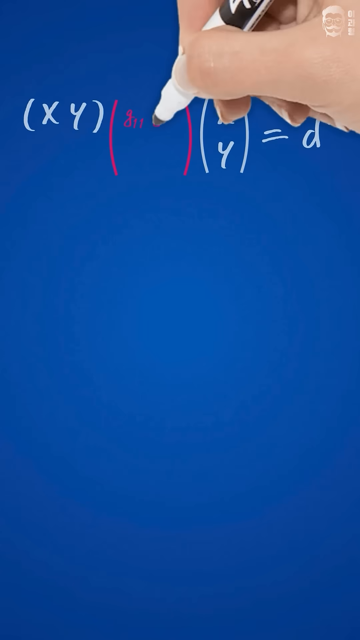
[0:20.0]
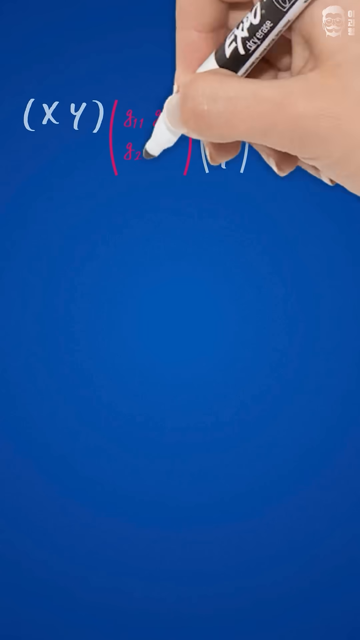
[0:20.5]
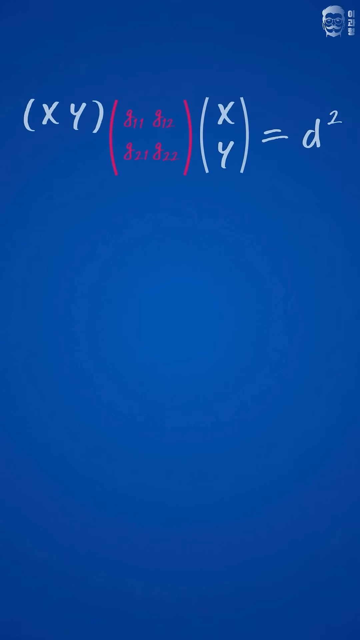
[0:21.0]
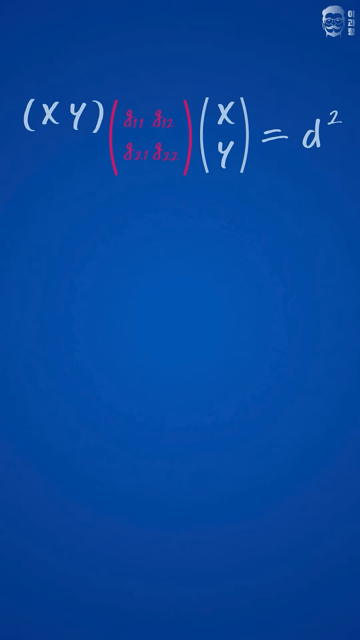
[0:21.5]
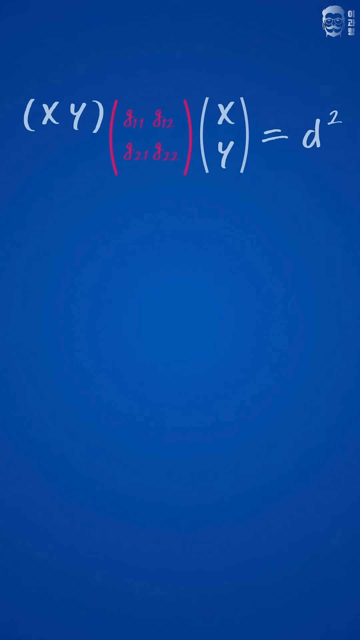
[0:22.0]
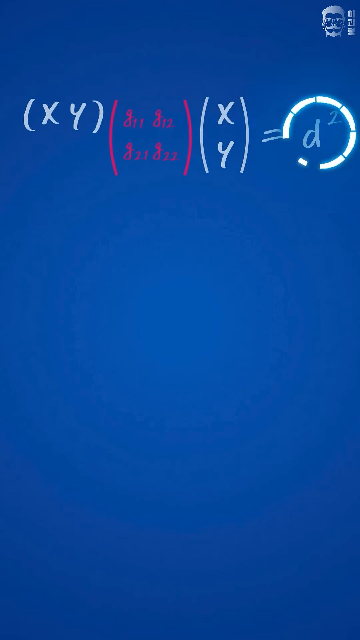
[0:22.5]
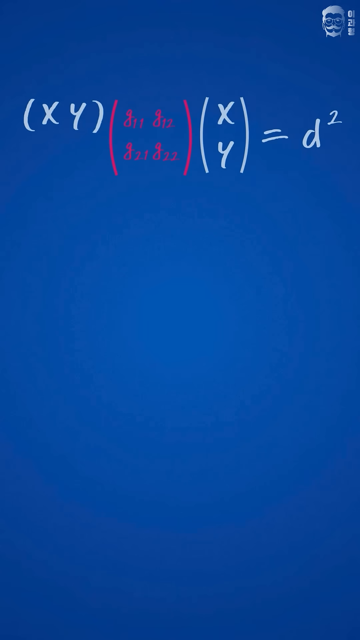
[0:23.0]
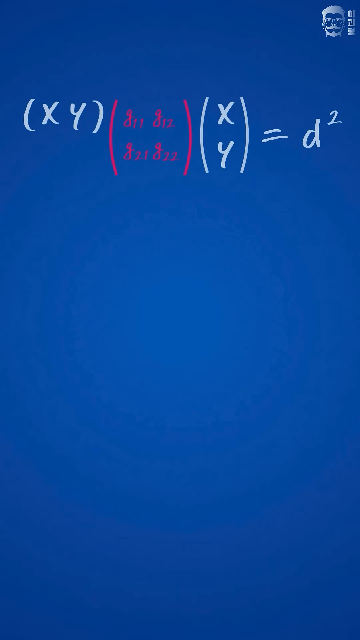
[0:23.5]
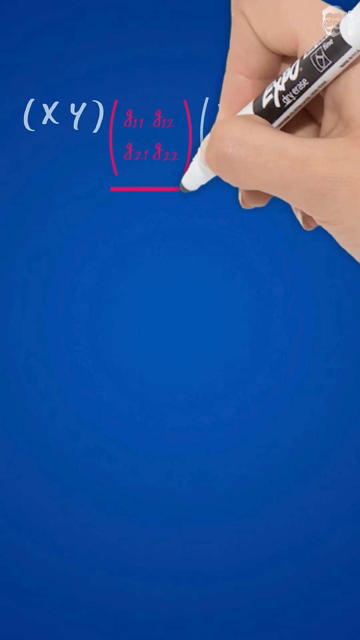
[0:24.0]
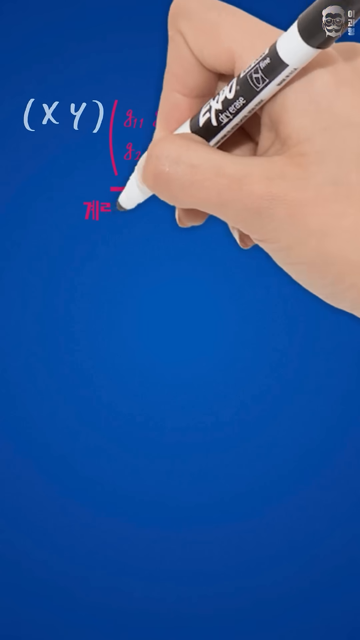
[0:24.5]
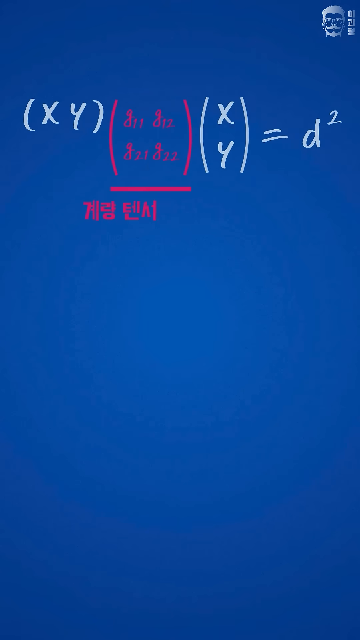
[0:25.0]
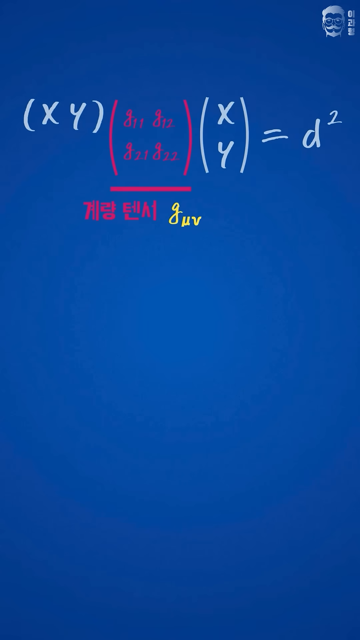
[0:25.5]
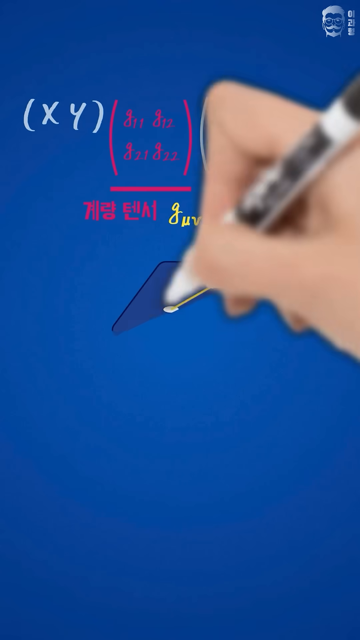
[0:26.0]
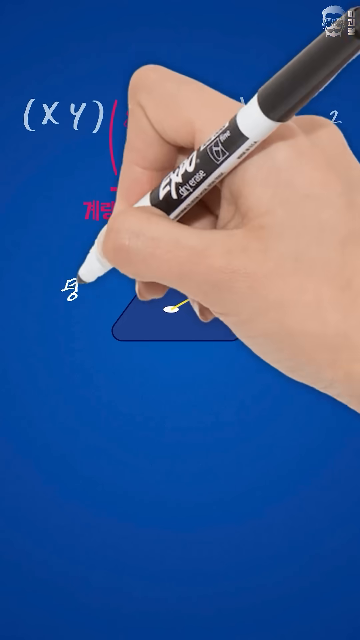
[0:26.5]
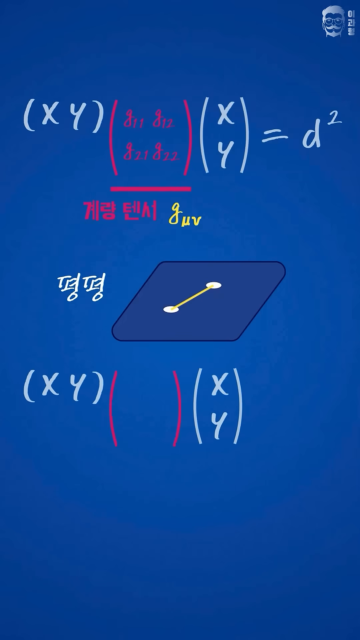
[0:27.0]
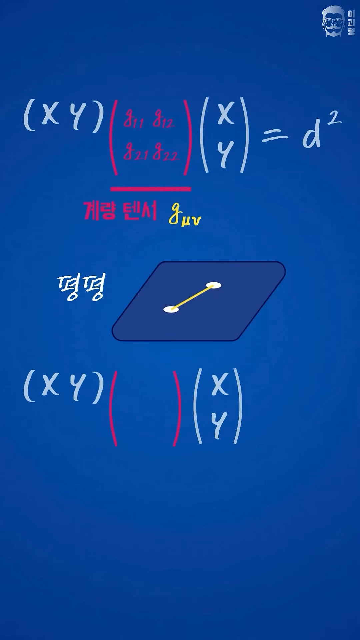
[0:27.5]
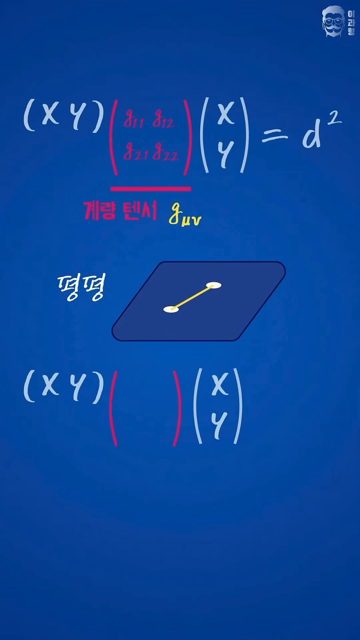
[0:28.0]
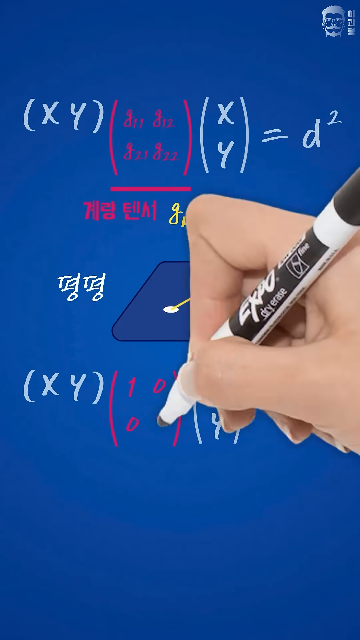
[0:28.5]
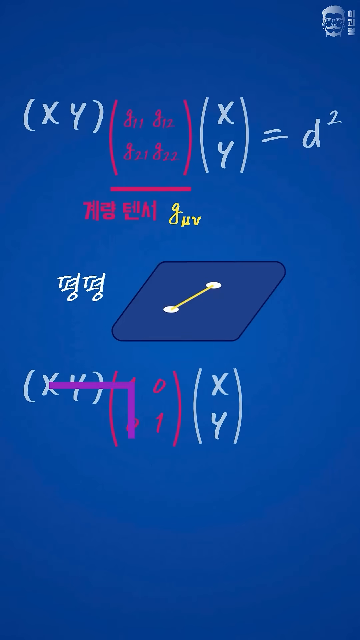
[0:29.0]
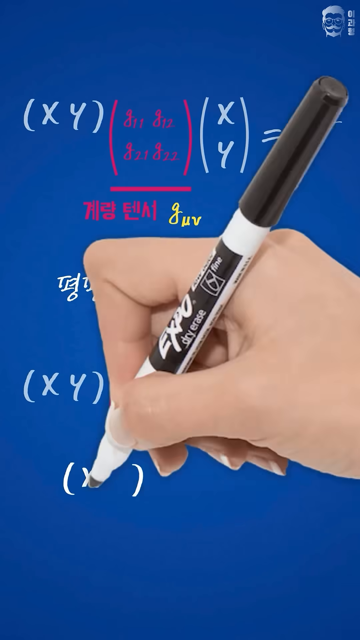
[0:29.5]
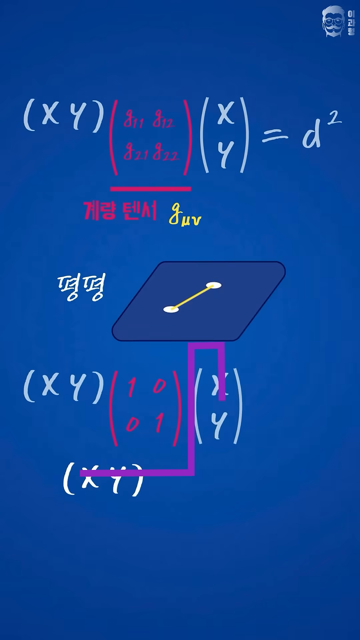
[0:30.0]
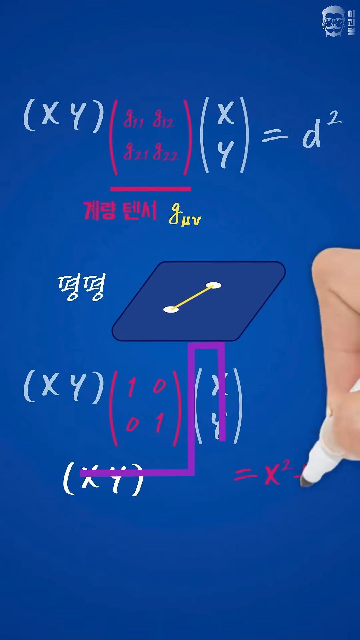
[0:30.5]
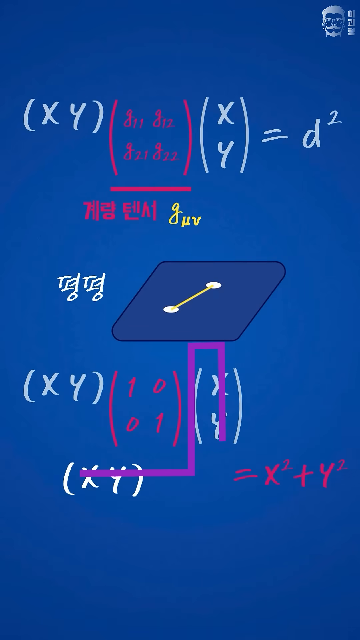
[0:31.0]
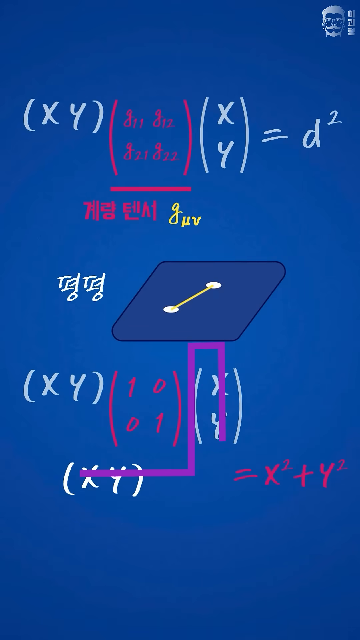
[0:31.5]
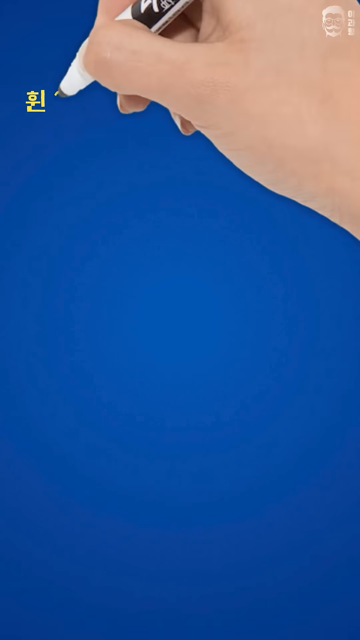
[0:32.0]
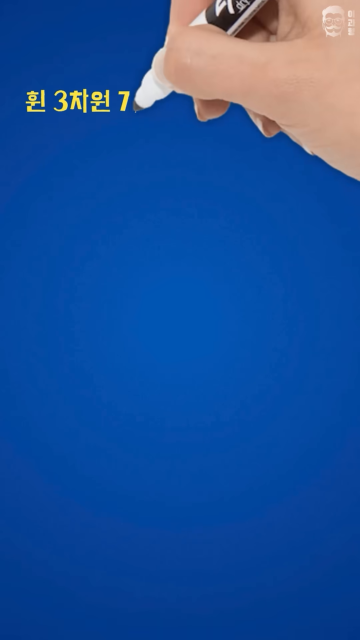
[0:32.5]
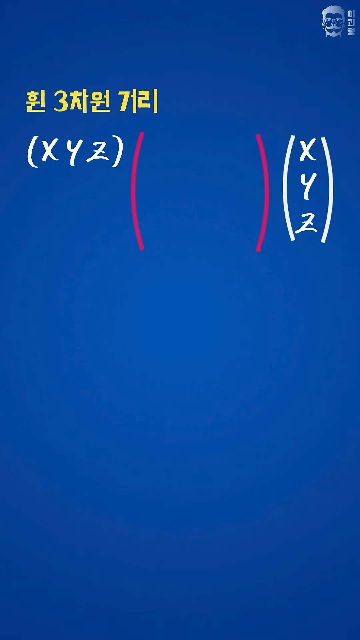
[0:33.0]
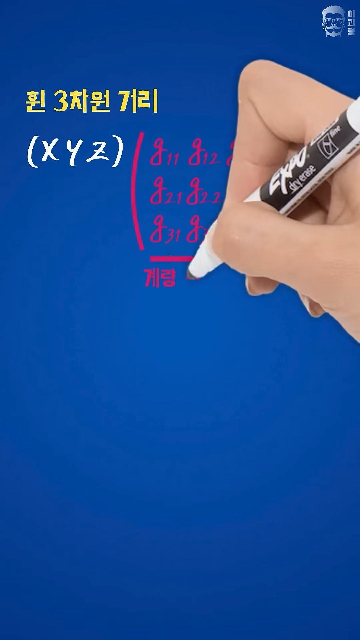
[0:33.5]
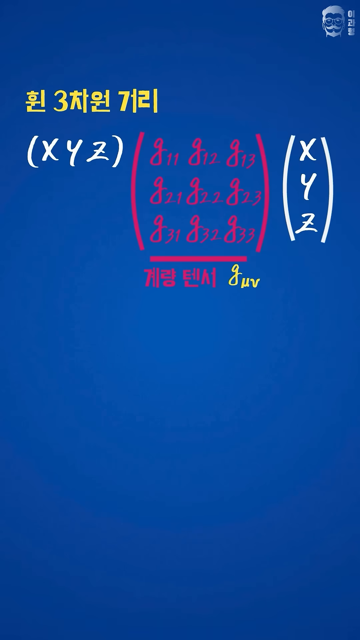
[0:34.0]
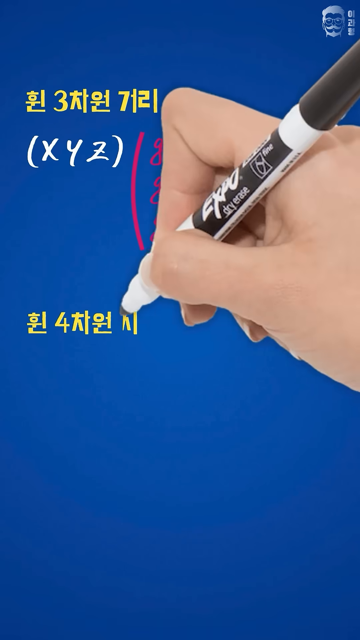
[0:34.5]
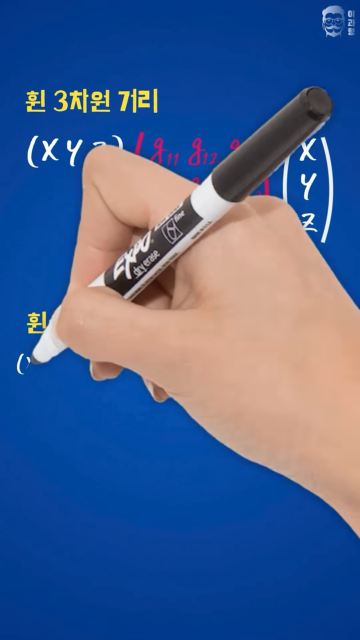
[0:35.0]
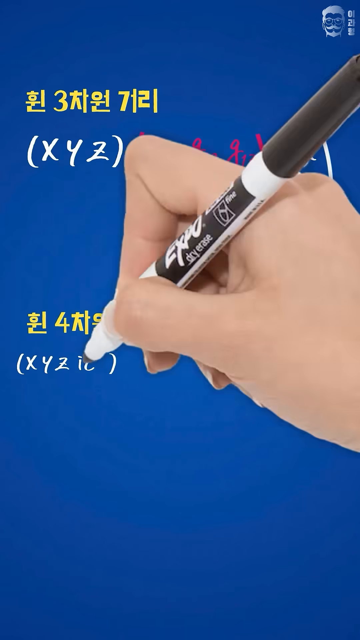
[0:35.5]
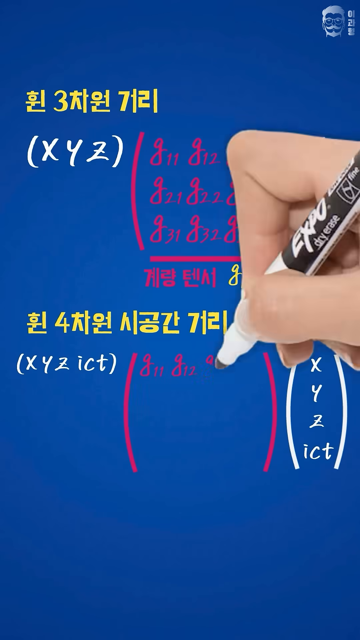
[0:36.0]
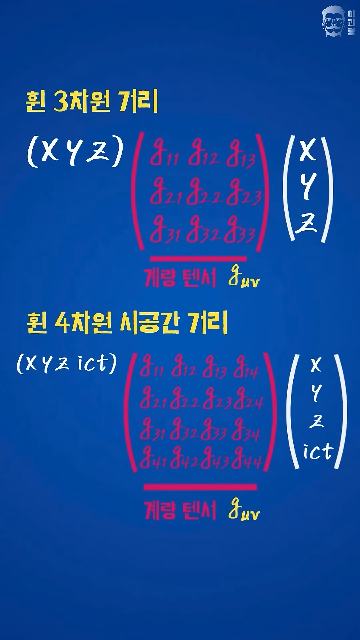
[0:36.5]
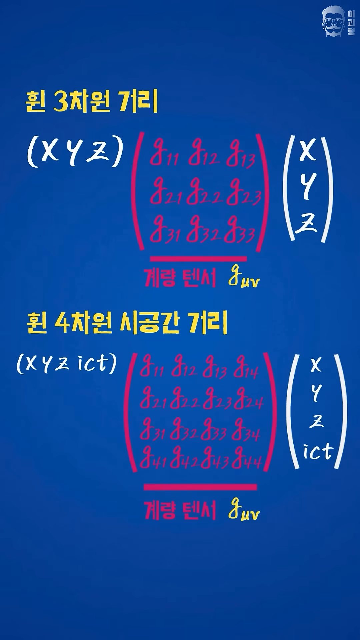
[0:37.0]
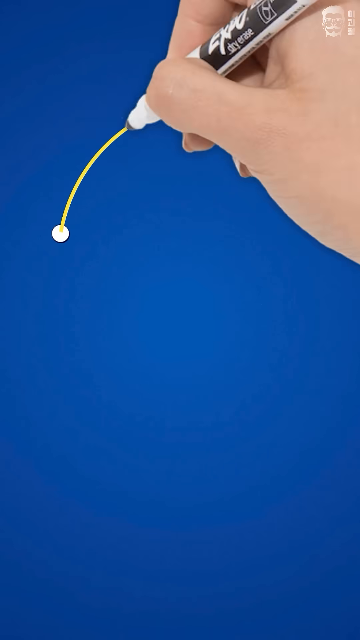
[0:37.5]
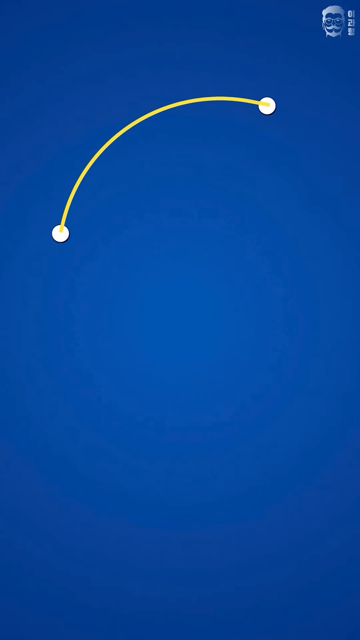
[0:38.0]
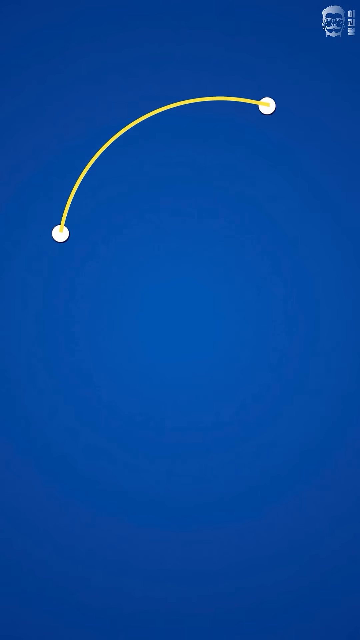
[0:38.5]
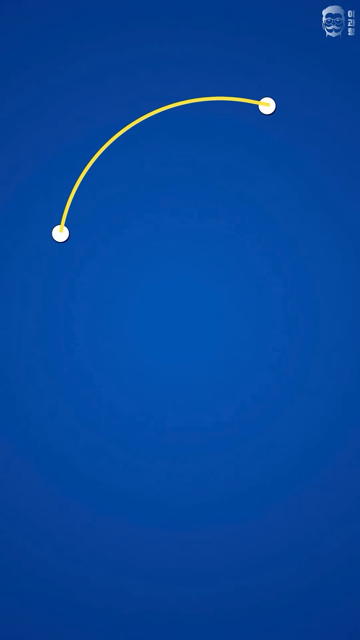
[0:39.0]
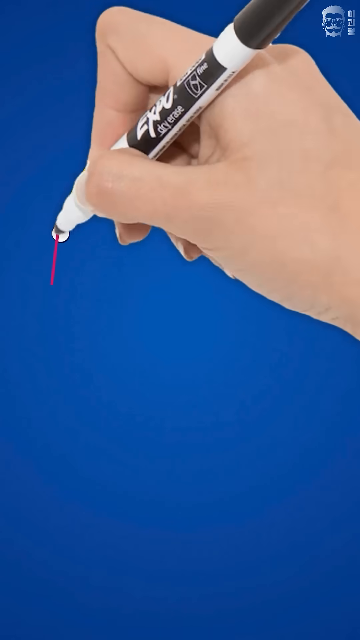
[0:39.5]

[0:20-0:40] The background is a dark-to-light blue gradient, and a more advanced mathematical expression appears. On the left, xy is multiplied by a red matrix with some kind of elements inside, possibly symbols or zeros, and that matrix is multiplied by xy again on the right. The right side of the equation equals d to the second power, distance squared. Underneath is some red Korean text along with a small yellow label that looks like "G-U-V minus A." A small rectangle is drawn below two white points connected by a yellow line, representing two points in a flat 2D space. At the top, yellow Korean text serves as a label of some sort. The expression then involves three coordinates, x, y and z, and the red matrix in the middle is larger, a full 3 by 3 matrix.